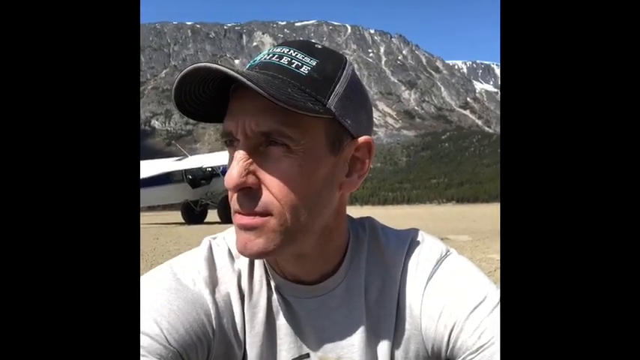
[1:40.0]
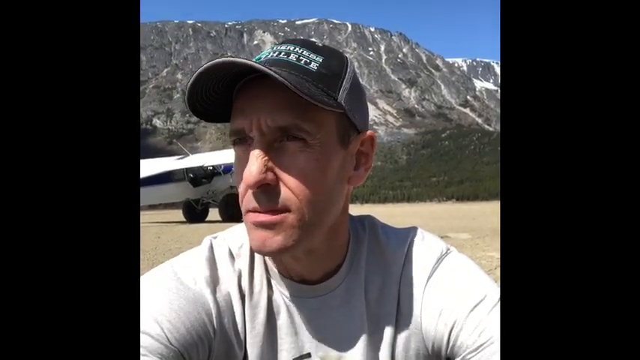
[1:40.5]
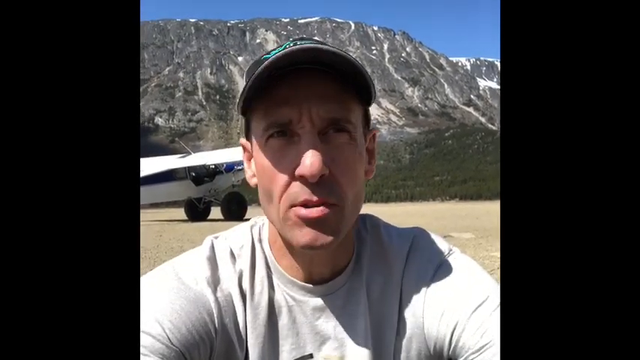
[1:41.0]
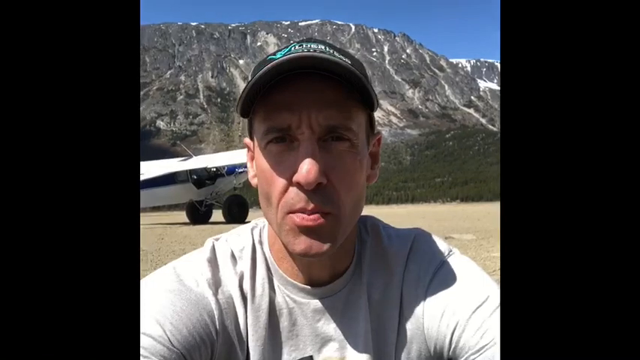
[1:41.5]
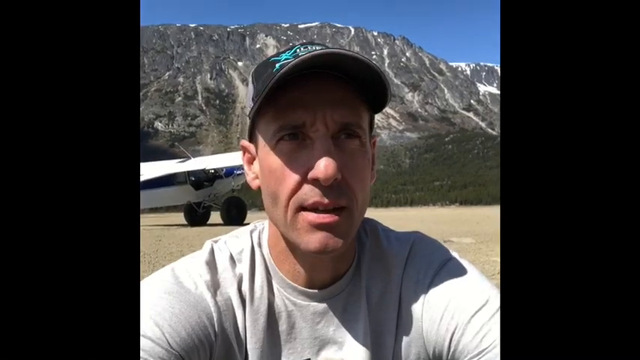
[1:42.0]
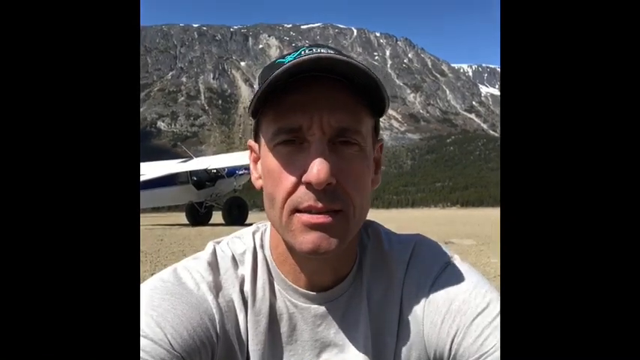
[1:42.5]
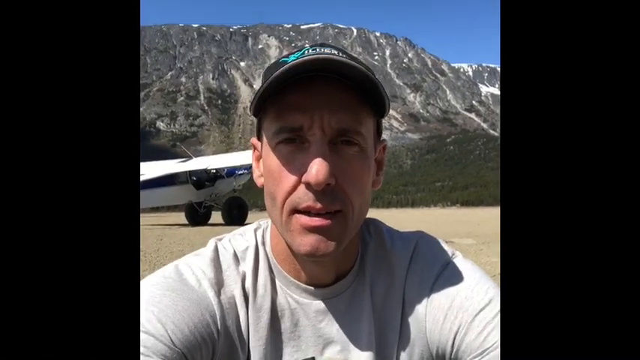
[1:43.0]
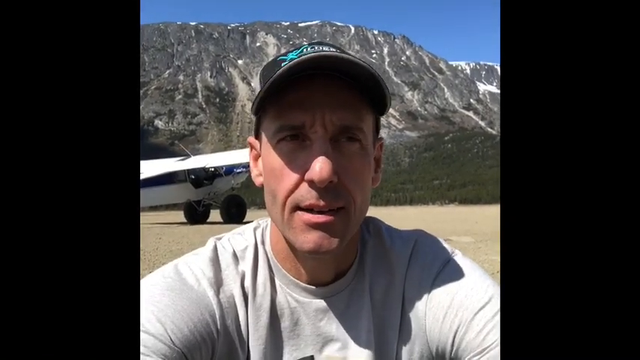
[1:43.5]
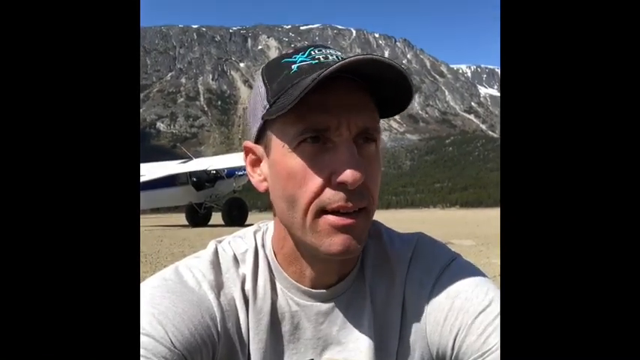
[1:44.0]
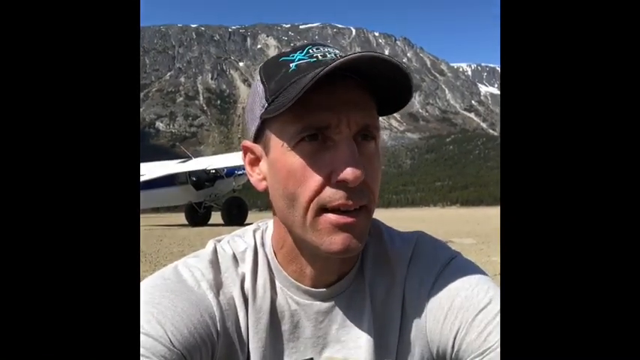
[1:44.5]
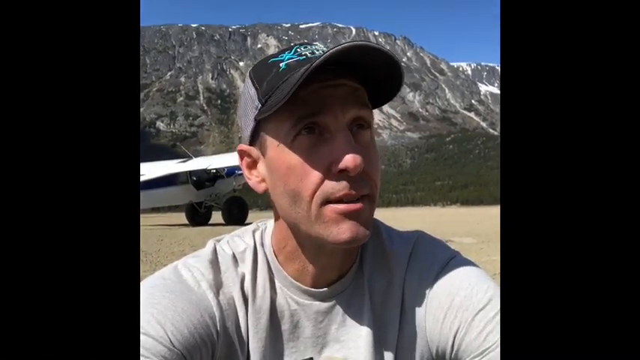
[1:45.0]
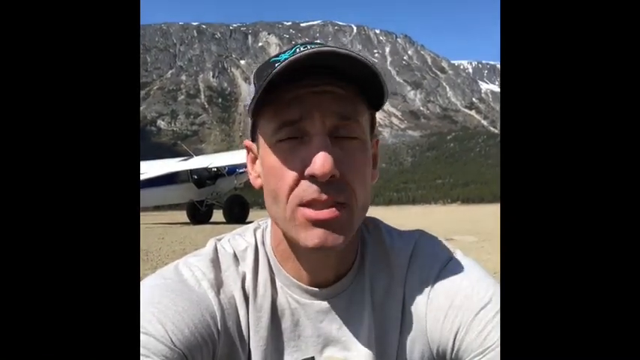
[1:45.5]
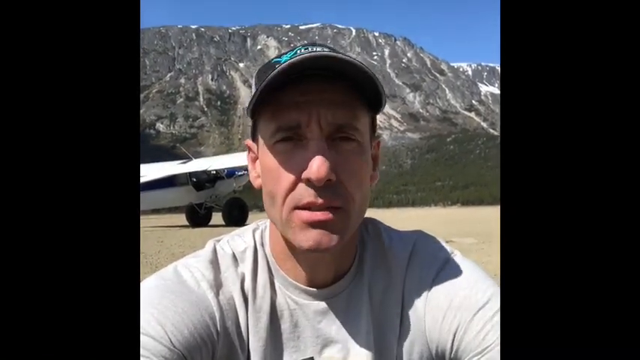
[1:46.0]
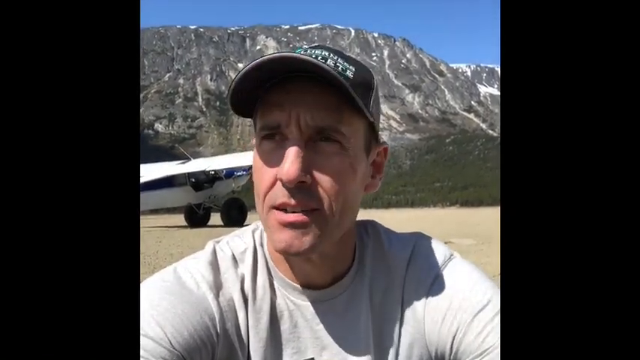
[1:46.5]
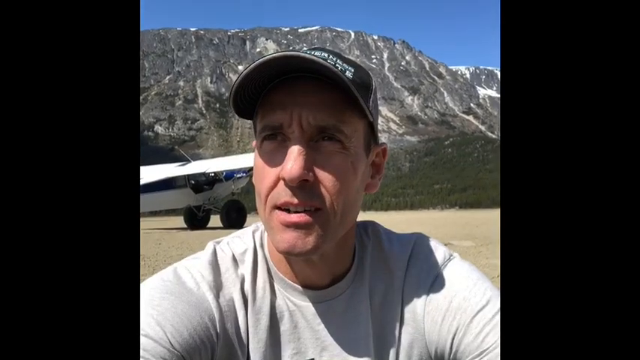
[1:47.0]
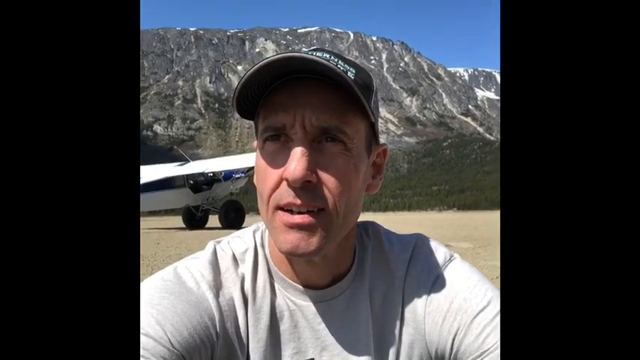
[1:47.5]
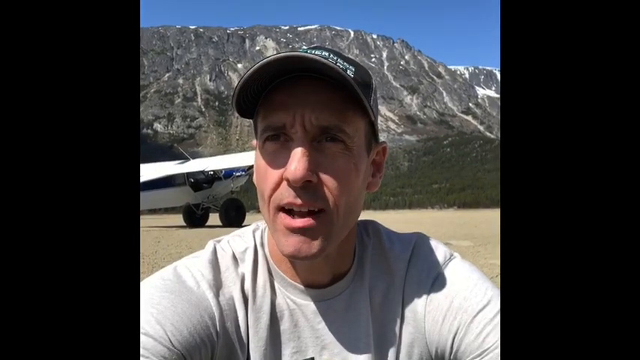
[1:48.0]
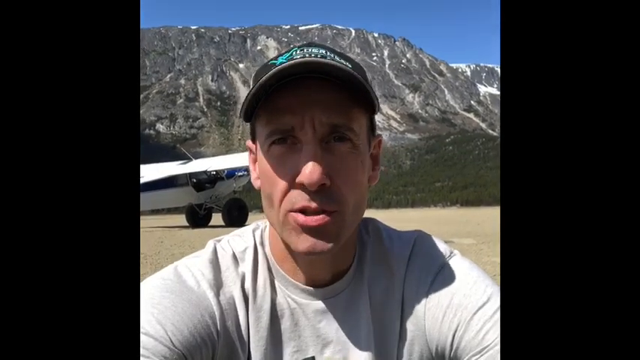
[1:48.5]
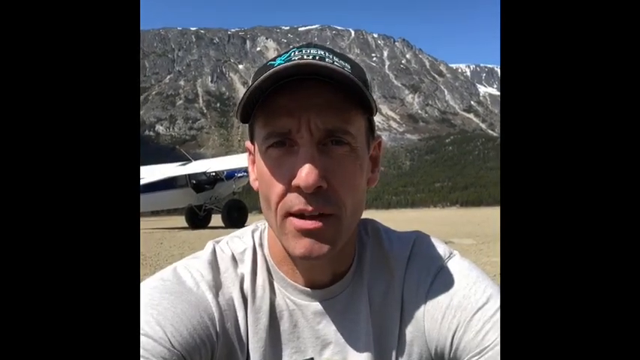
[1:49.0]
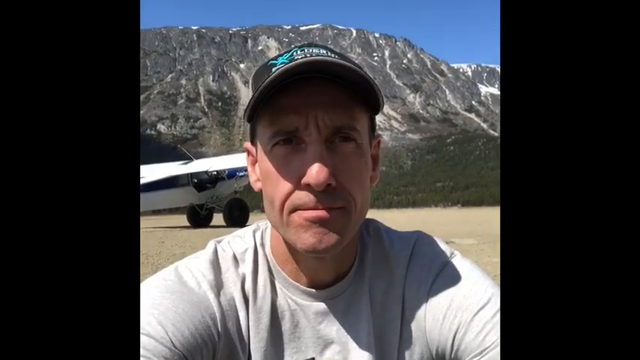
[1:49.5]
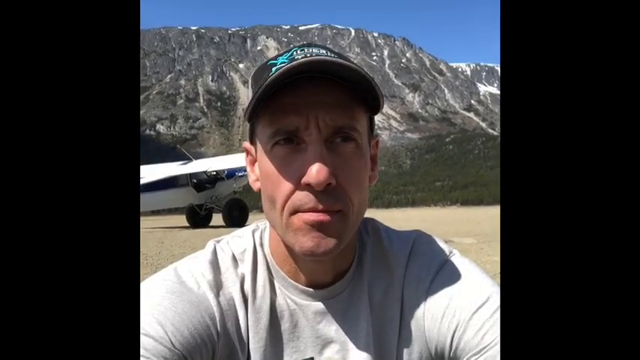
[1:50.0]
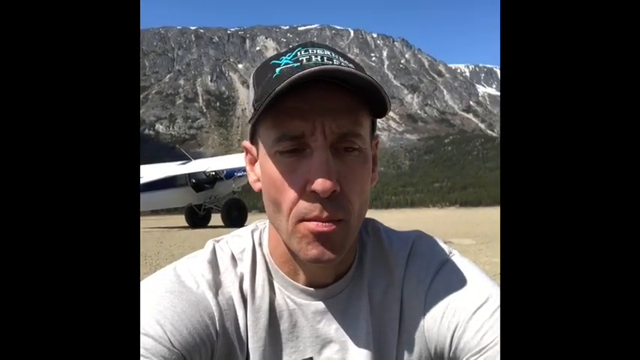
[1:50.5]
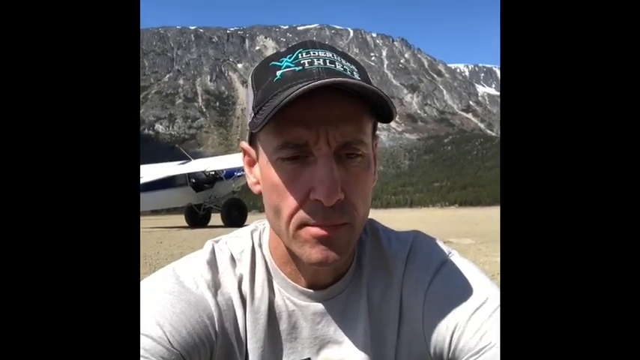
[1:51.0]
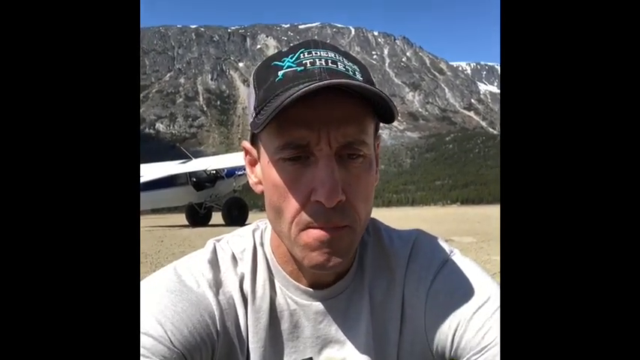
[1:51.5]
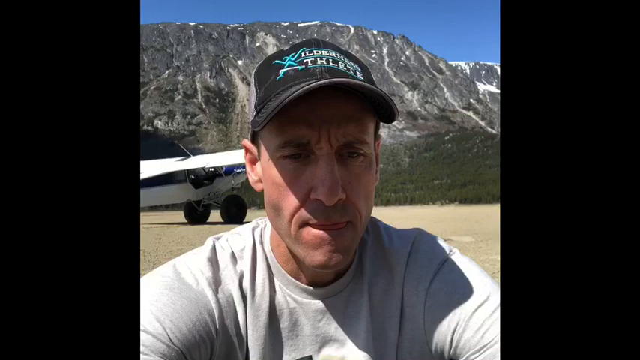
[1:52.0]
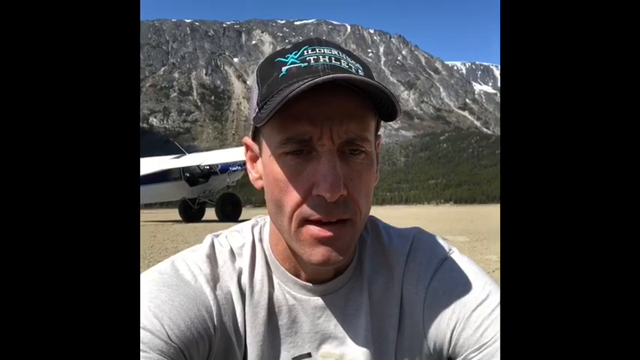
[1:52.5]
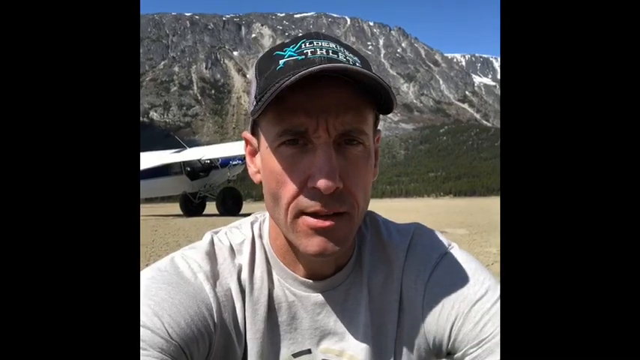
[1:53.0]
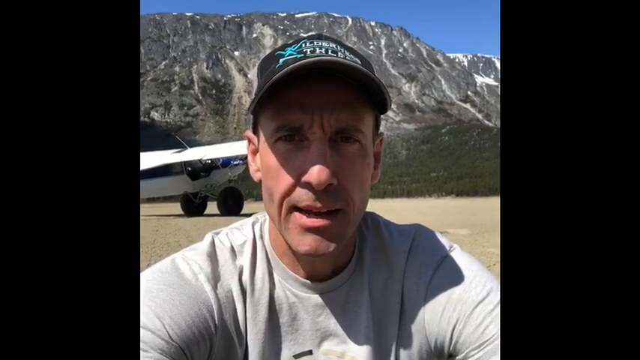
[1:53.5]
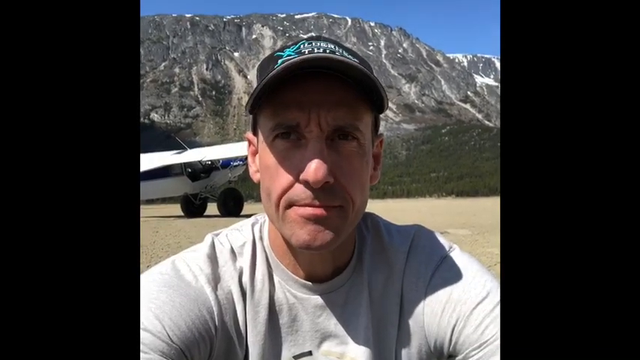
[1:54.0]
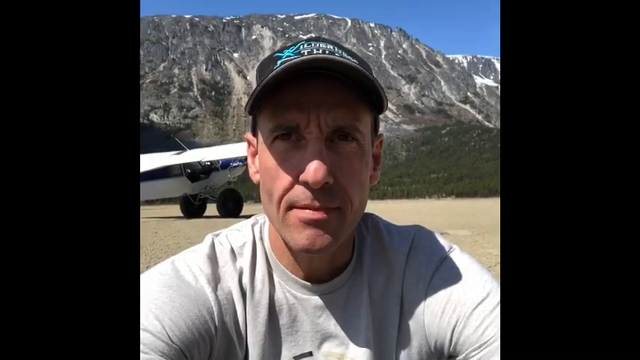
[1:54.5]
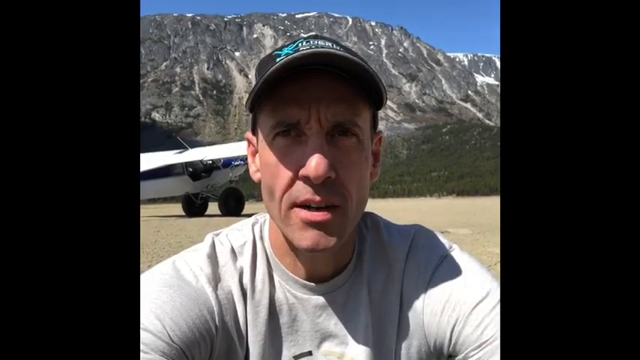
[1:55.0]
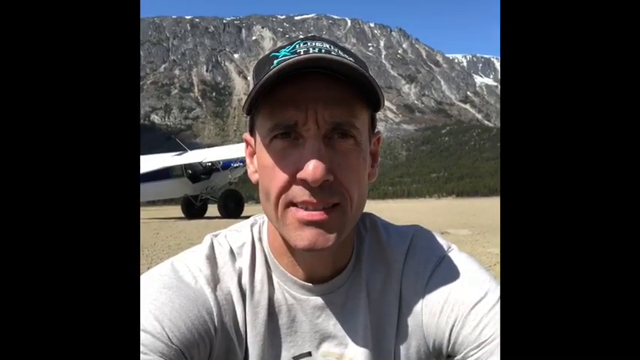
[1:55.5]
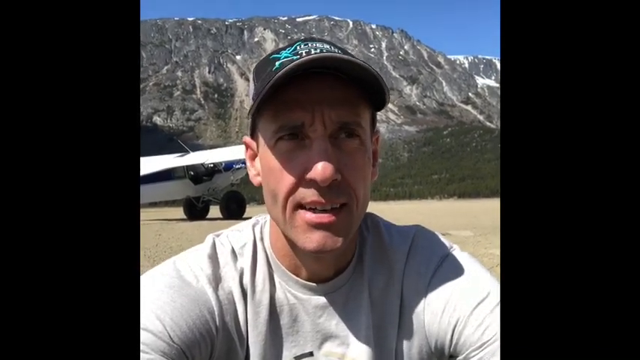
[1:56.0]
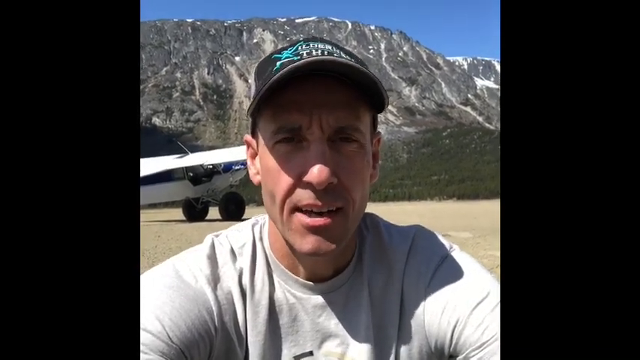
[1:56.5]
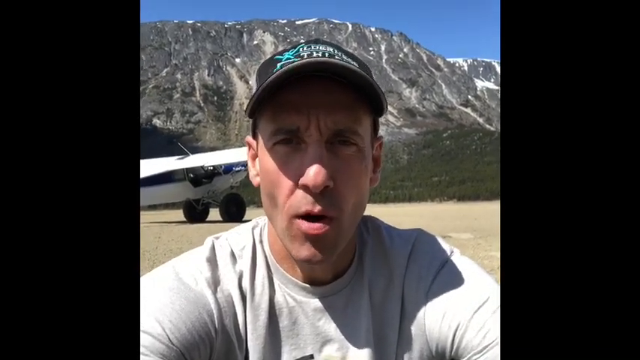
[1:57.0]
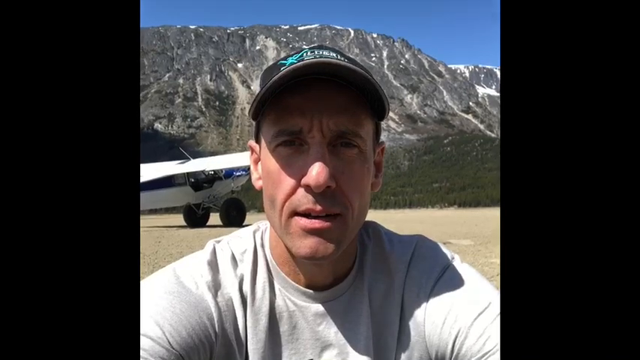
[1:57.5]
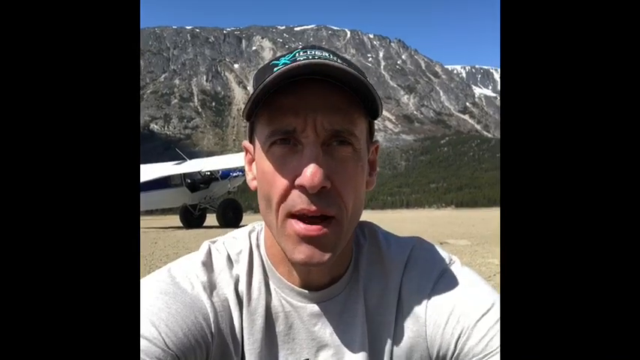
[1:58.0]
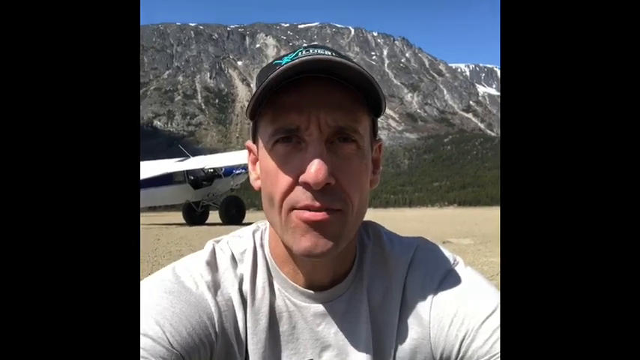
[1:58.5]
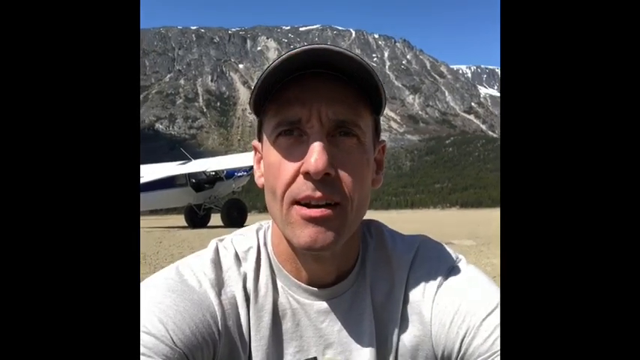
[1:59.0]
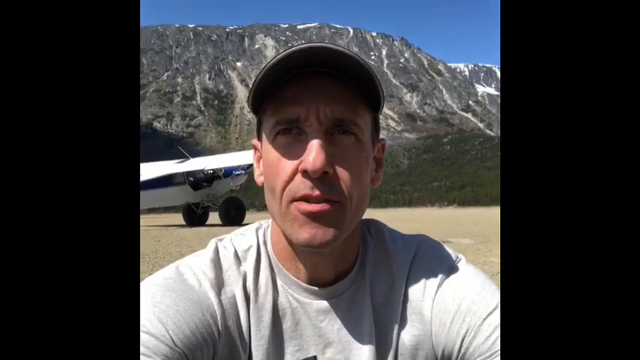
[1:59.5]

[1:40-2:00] A man speaks, seen from about the shoulders up, apparently holding the camera with both arms stretched out in front of him. He wears a black baseball cap whose shadow covers his eyes and nose, so his eyes are barely visible. Behind him is a flat brown area with a mountain in the background, and a white airplane is sitting on the flat area. He looks straight at the camera, then after a few seconds looks slightly left and up, making a motion with his mouth that seems to show he is thinking about something. He looks back at the camera, glances left, then looks down while speaking before looking back up. As he continues, he tilts the camera slightly toward himself, as if he wants to make gestures with his hands.